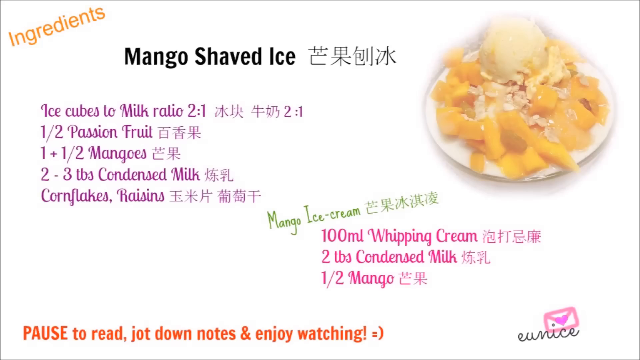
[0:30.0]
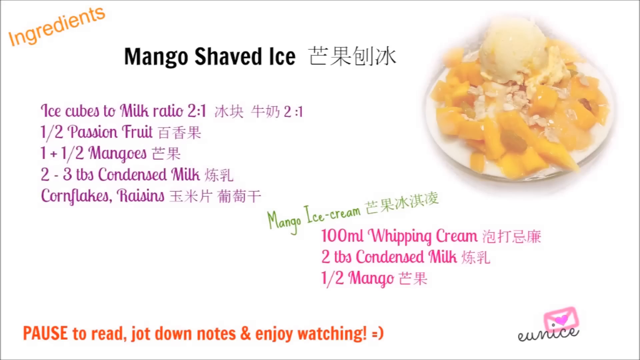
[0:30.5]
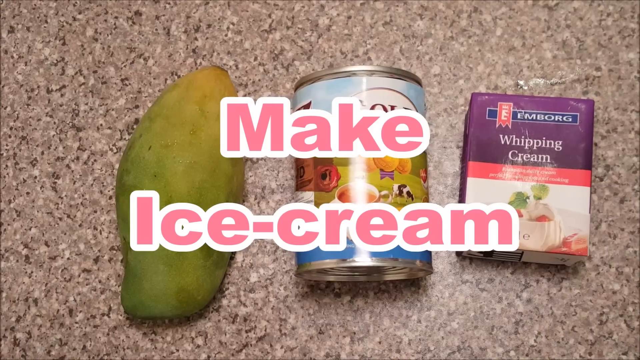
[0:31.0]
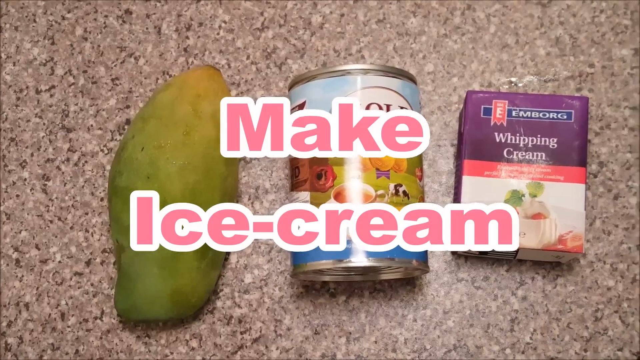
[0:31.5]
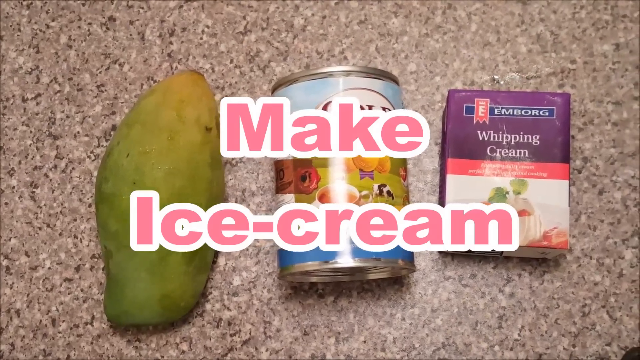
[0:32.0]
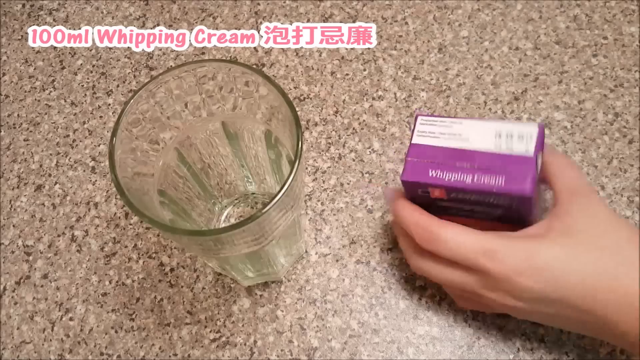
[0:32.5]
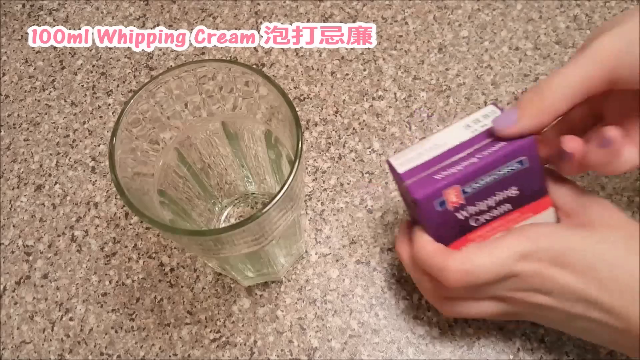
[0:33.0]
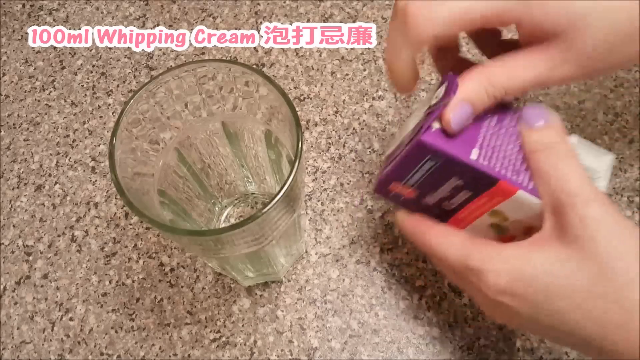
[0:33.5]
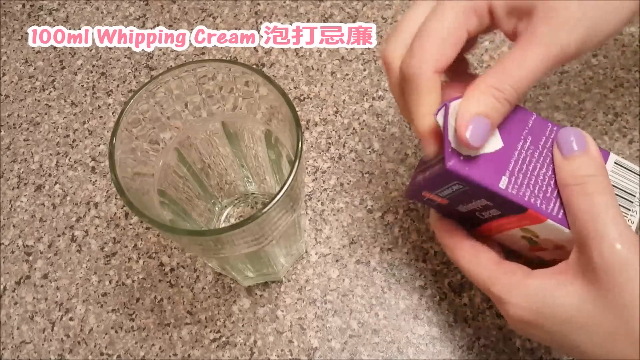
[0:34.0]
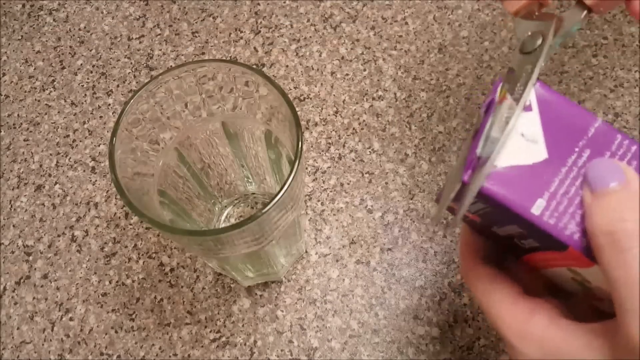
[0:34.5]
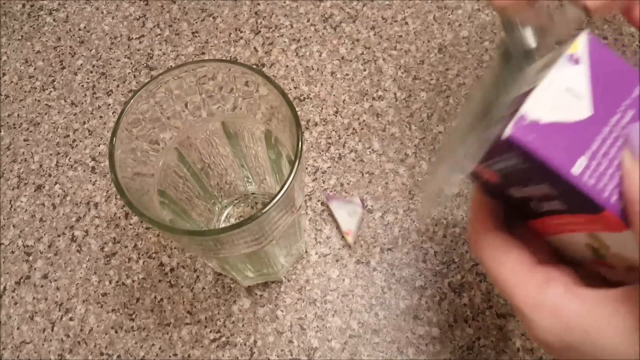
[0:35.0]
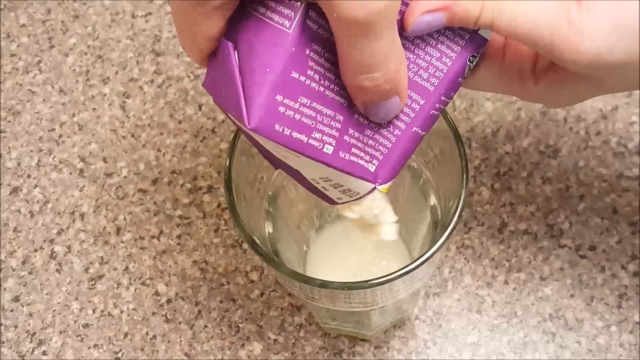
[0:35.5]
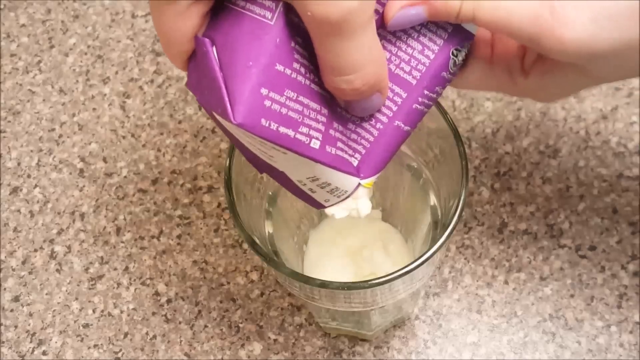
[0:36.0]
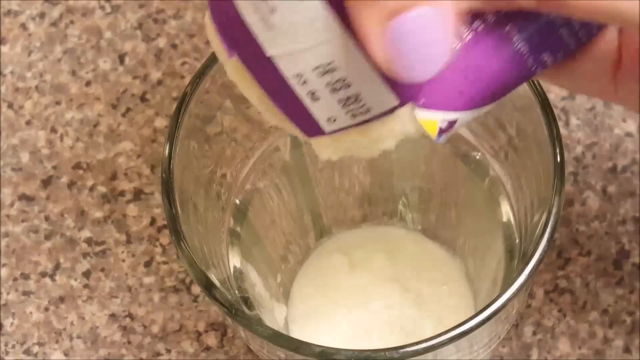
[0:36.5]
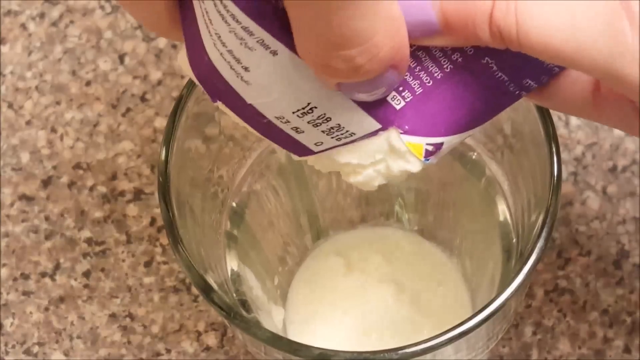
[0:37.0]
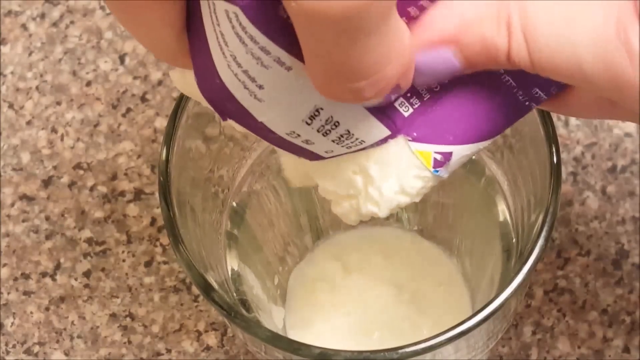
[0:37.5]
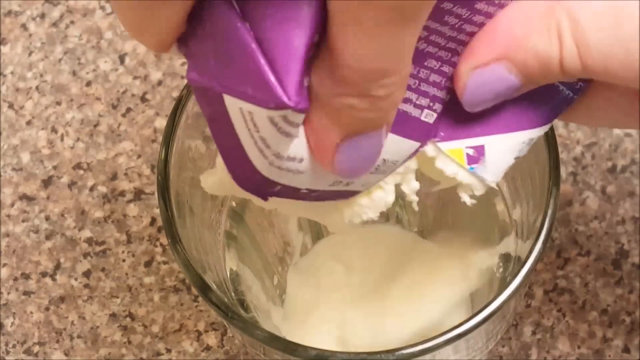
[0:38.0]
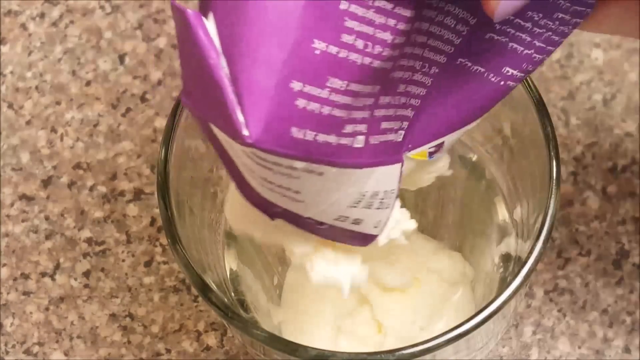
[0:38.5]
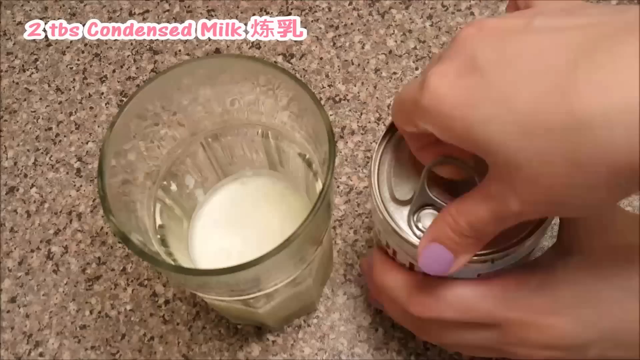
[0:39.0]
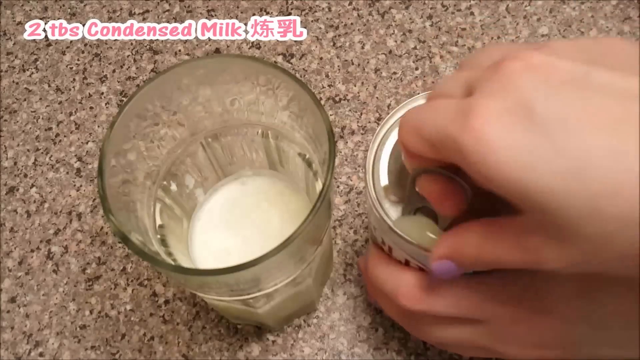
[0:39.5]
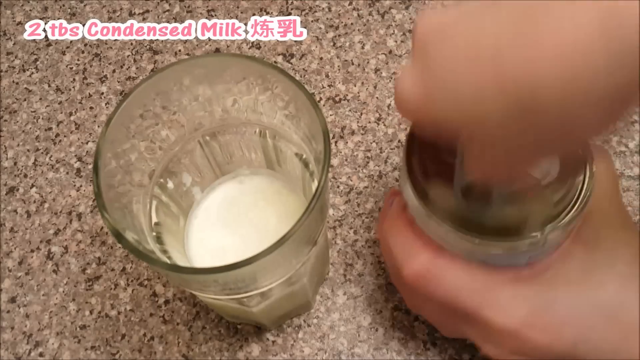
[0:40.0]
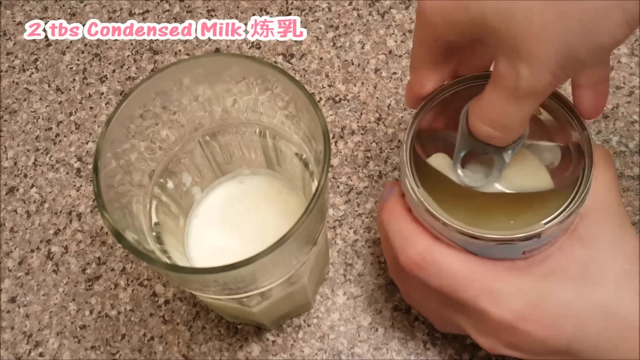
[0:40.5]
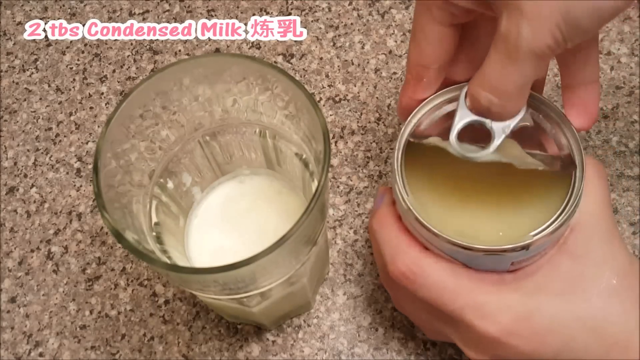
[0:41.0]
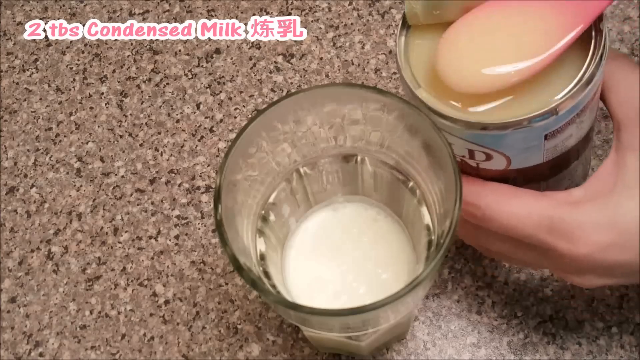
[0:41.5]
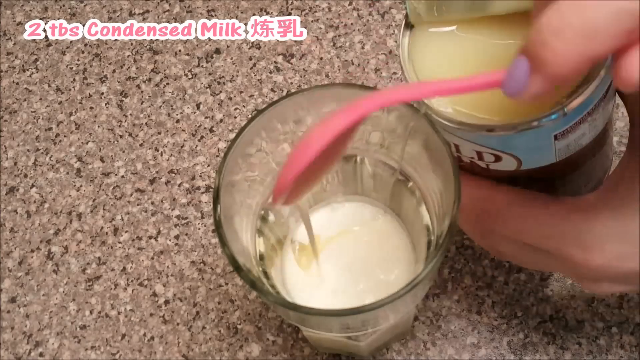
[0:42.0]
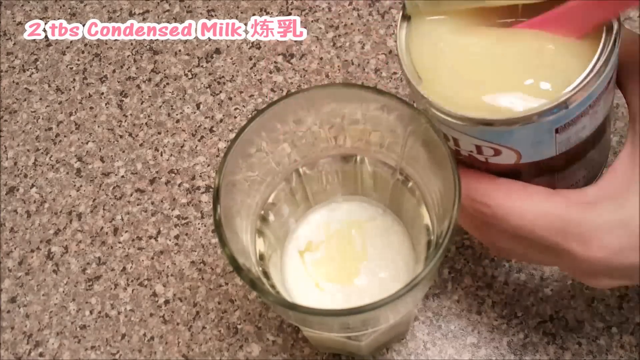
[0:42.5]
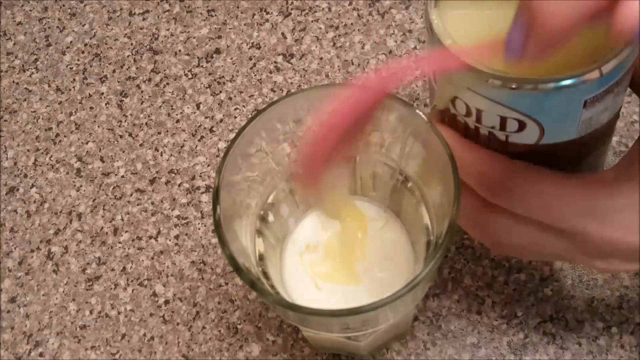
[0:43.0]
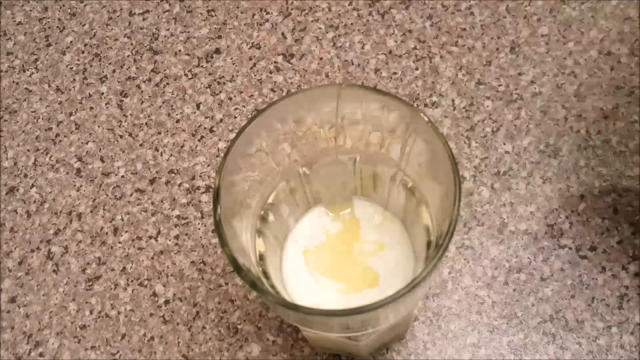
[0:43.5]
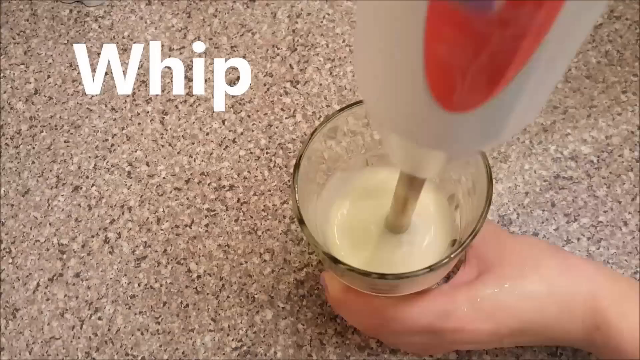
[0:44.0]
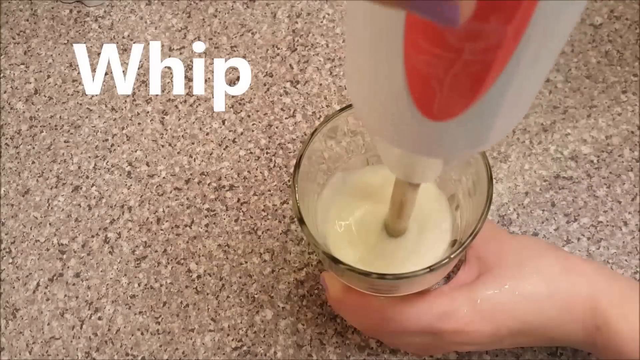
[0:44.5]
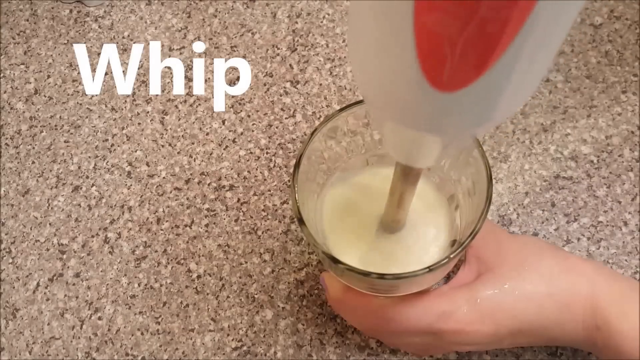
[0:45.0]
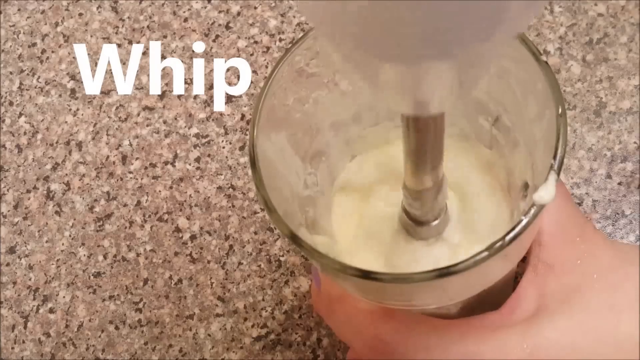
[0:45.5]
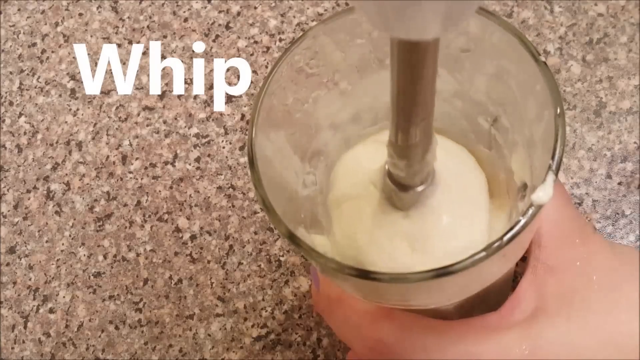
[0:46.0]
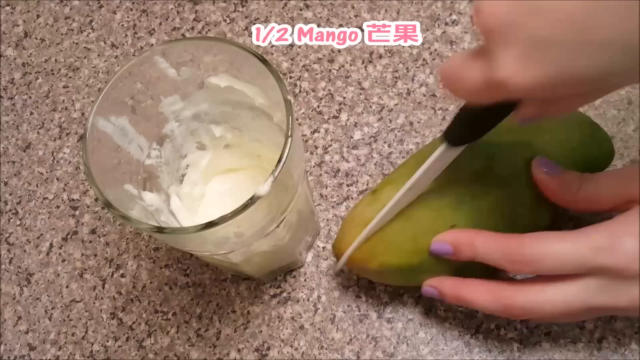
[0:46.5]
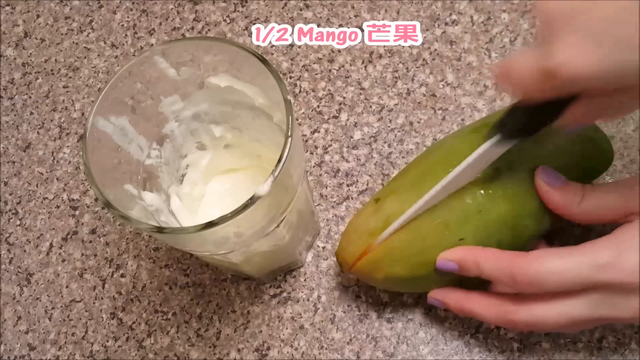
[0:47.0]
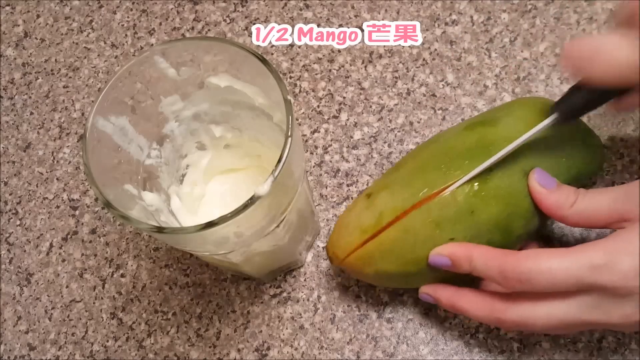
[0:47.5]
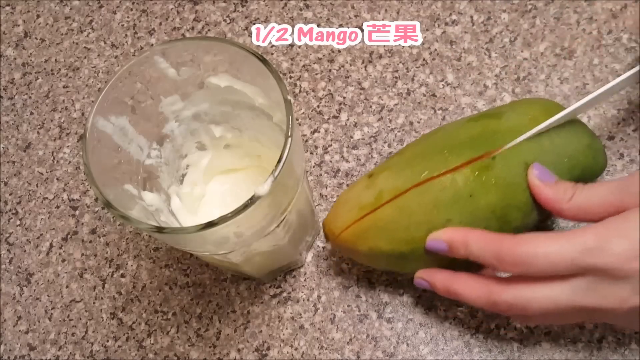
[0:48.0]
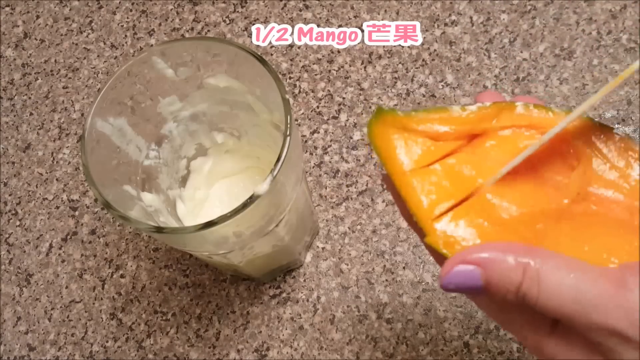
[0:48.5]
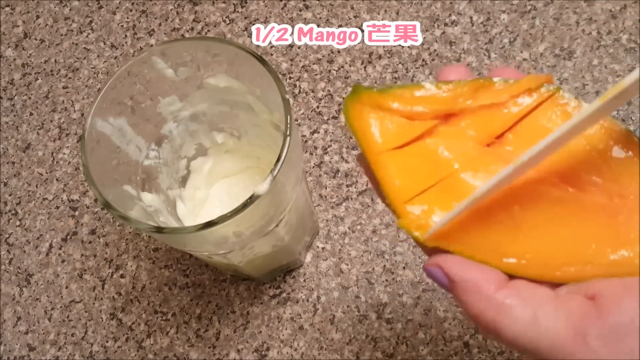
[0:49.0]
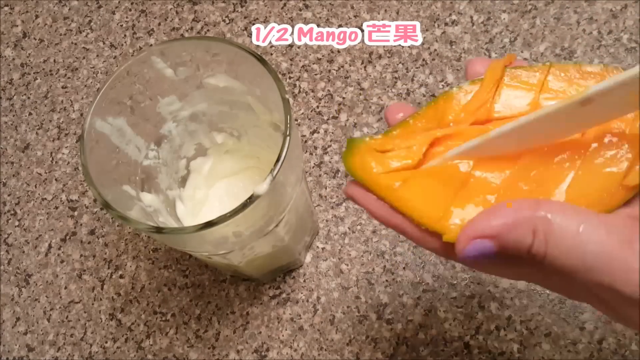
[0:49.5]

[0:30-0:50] The mango shaved ice recipe continues, then transitions to a screen showing a marble-like counter with text that says "Make ice cream!". Whipping cream is put into a cup, and the two tablespoons of condensed milk are added. The whipping cream is whipped to a thick consistency, and then half a mango is cut up. No people or animals appear, only the hands of the person making the dish.